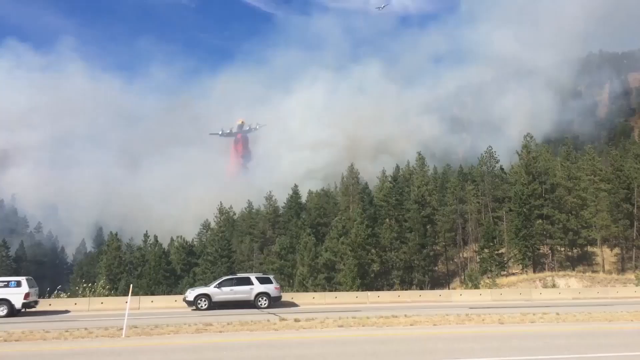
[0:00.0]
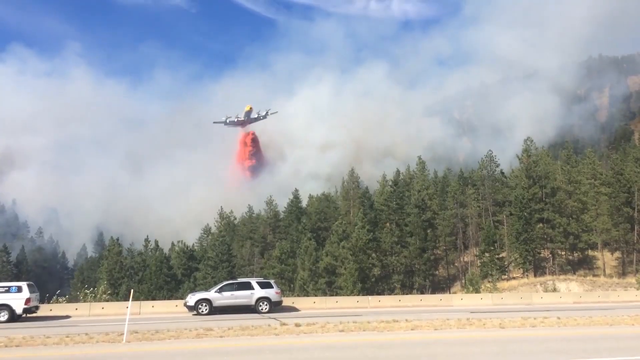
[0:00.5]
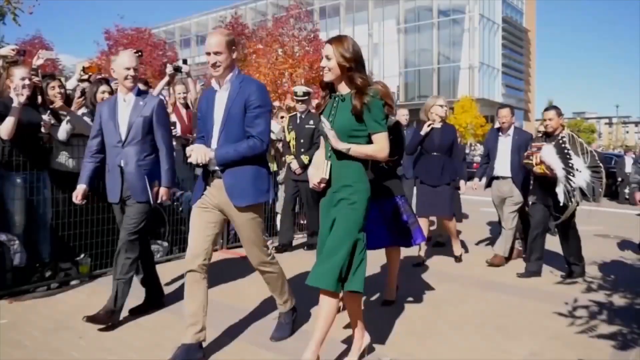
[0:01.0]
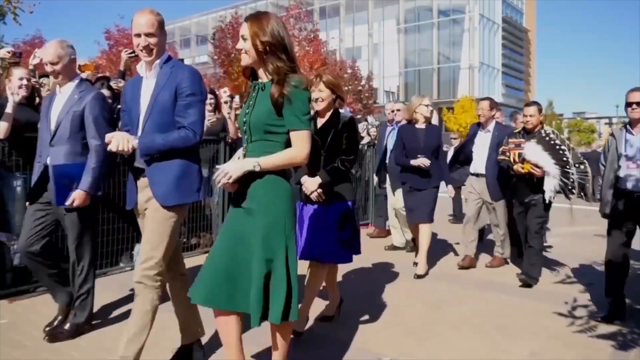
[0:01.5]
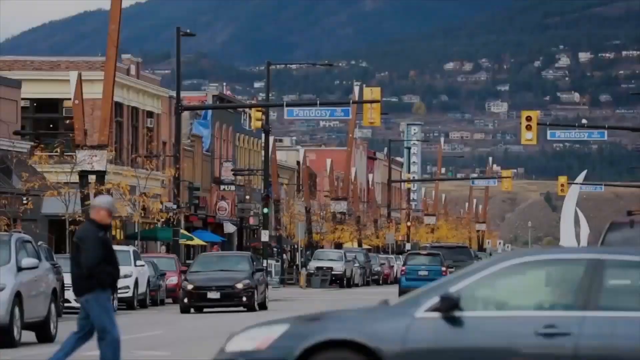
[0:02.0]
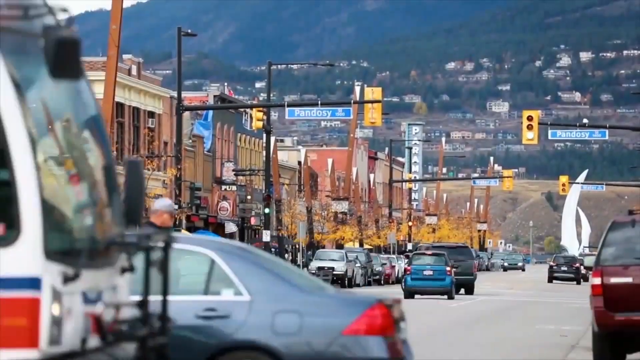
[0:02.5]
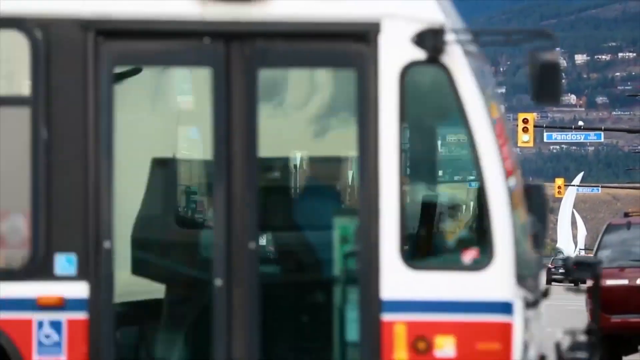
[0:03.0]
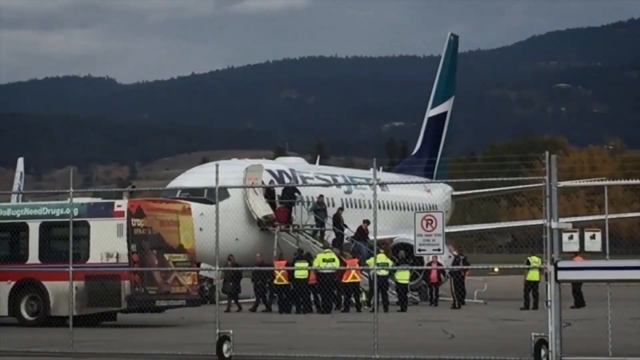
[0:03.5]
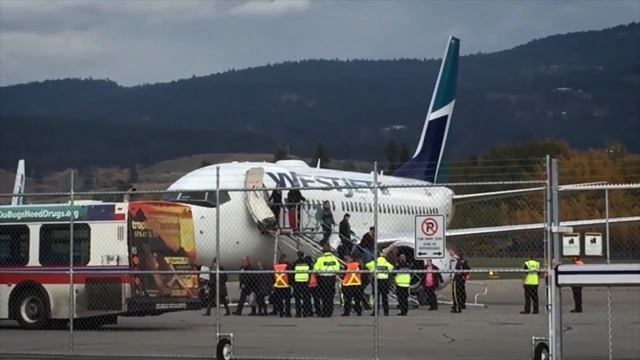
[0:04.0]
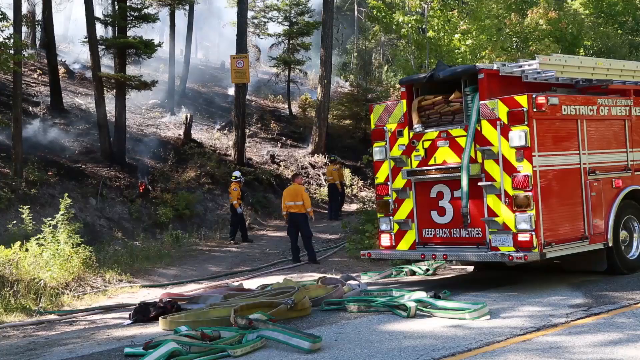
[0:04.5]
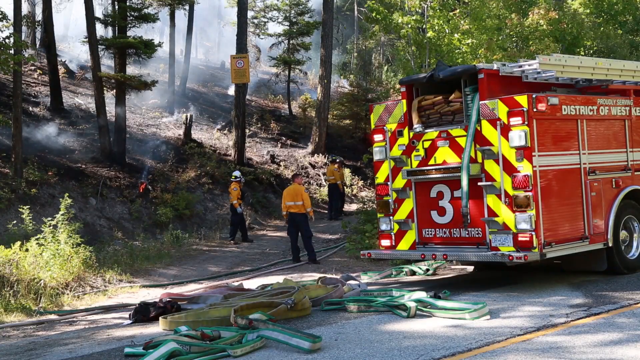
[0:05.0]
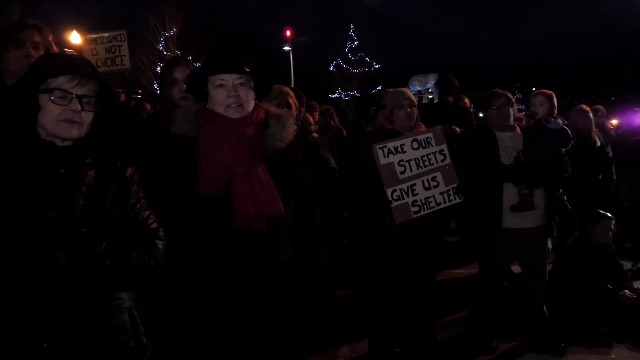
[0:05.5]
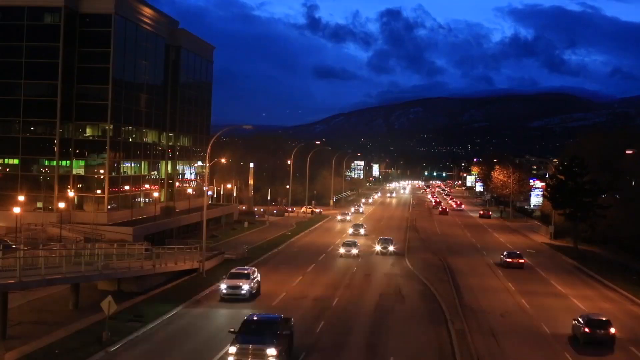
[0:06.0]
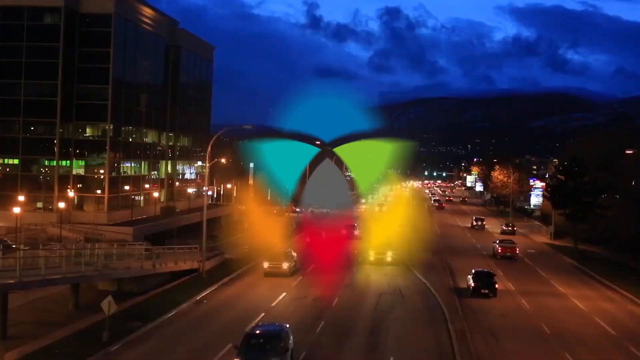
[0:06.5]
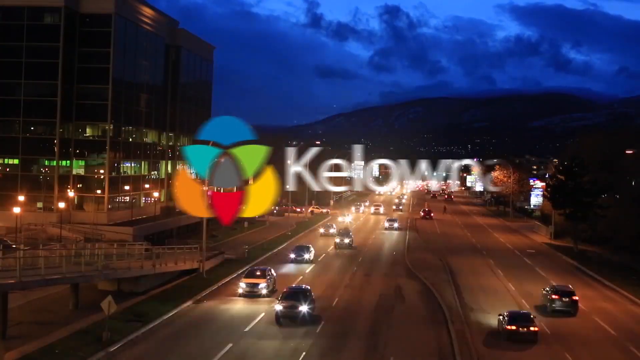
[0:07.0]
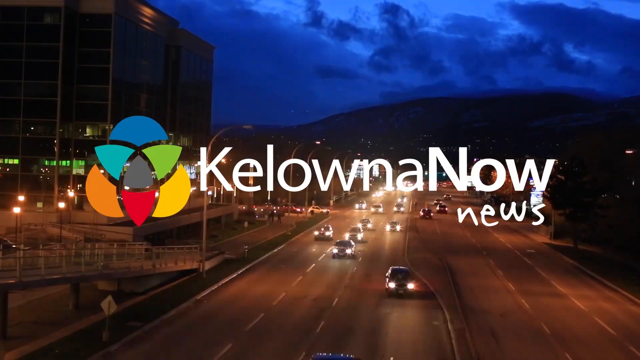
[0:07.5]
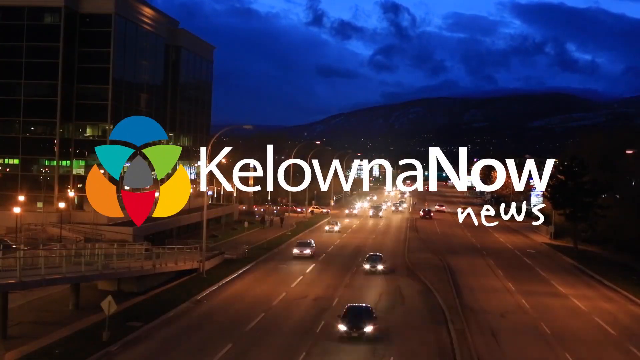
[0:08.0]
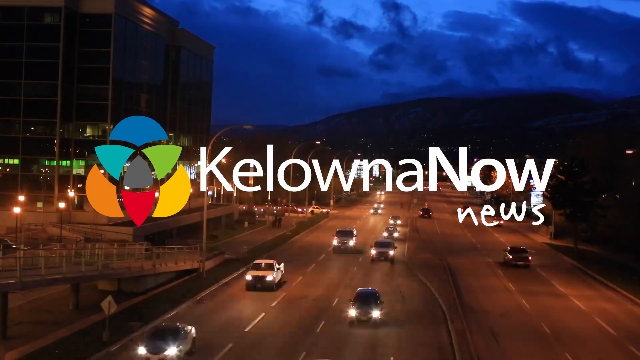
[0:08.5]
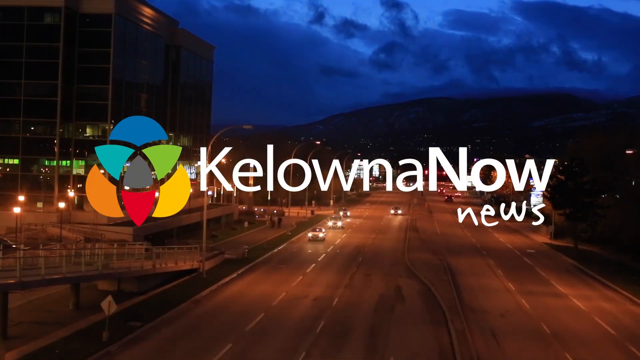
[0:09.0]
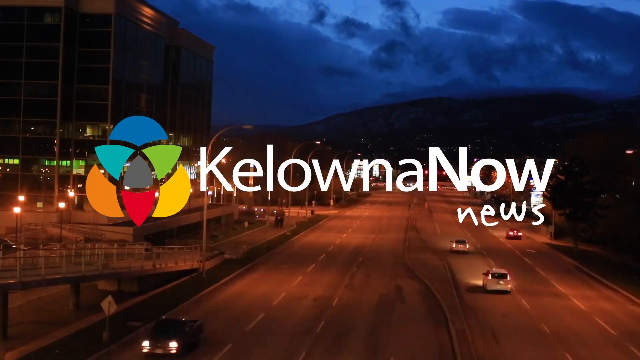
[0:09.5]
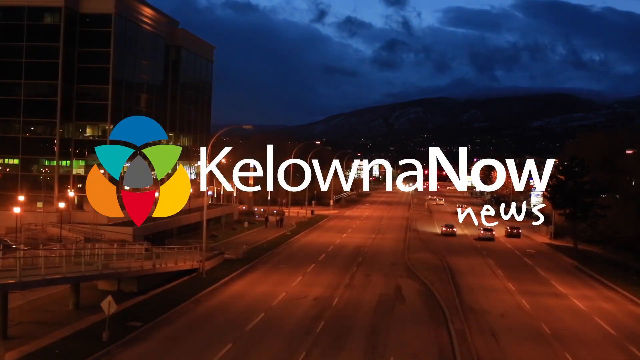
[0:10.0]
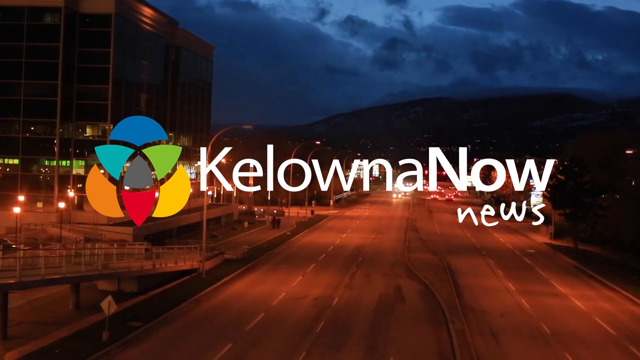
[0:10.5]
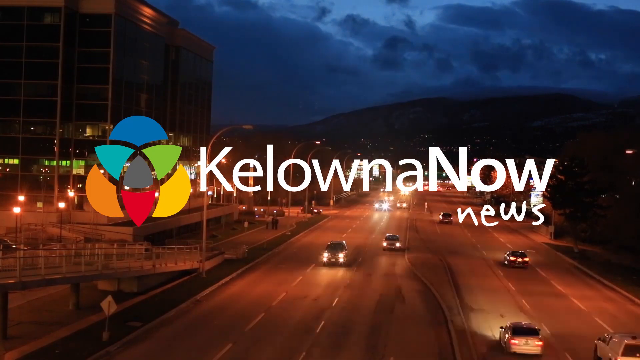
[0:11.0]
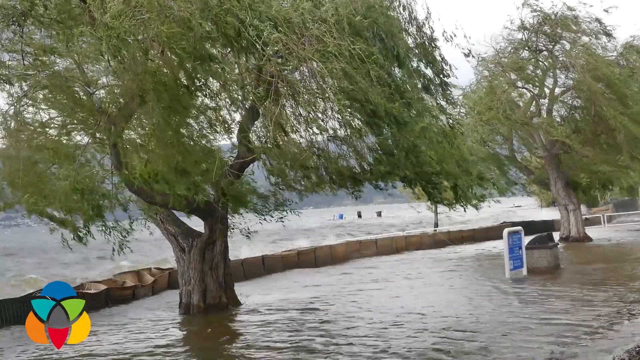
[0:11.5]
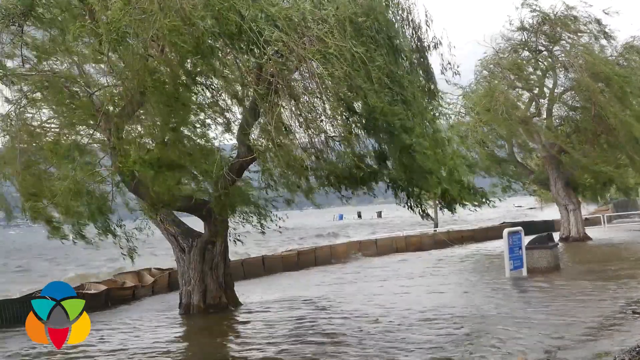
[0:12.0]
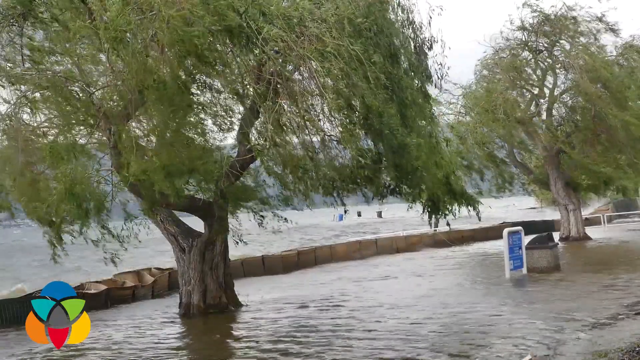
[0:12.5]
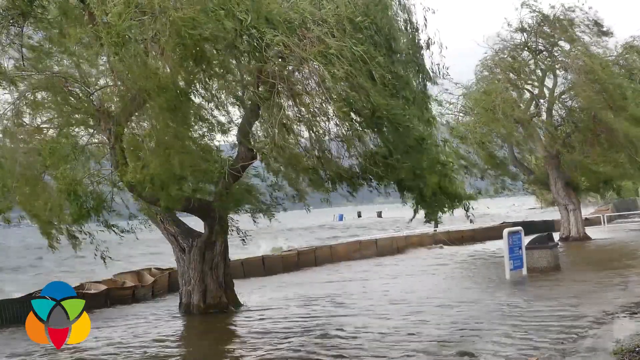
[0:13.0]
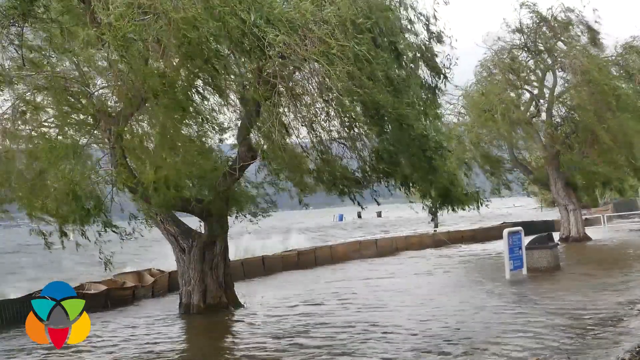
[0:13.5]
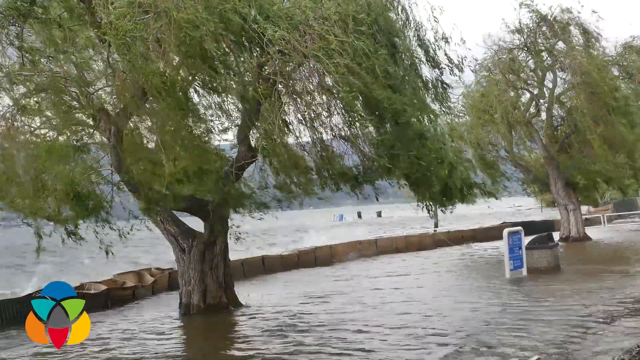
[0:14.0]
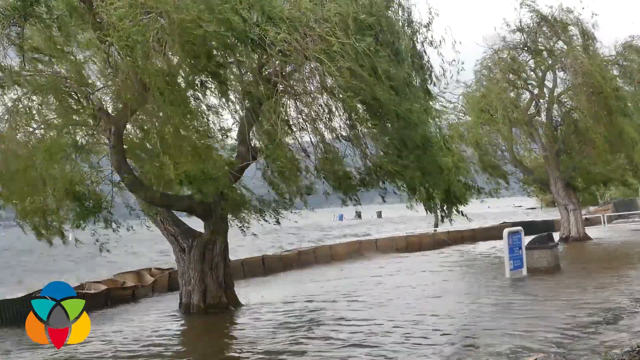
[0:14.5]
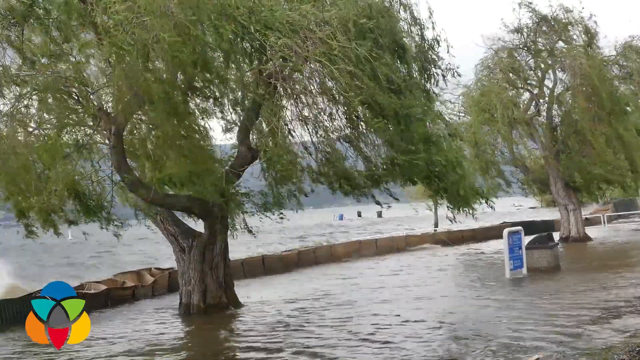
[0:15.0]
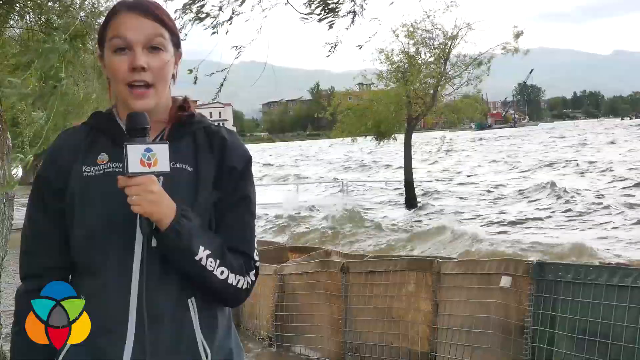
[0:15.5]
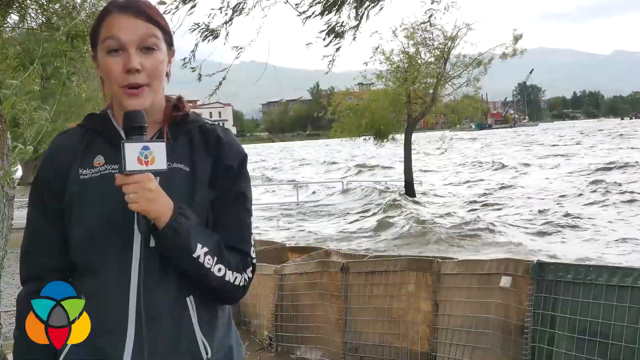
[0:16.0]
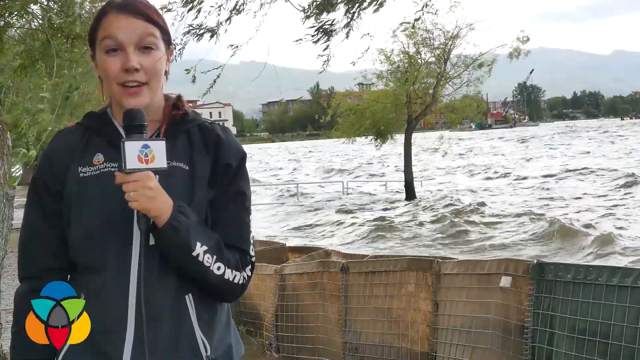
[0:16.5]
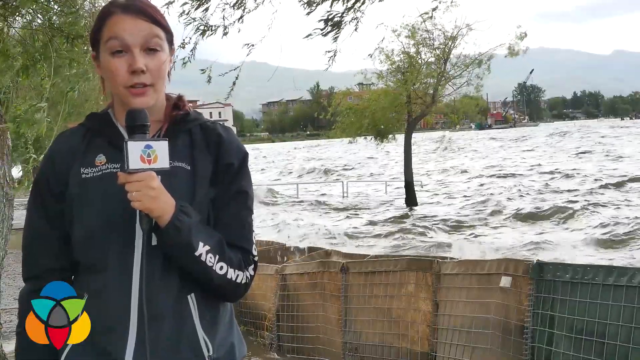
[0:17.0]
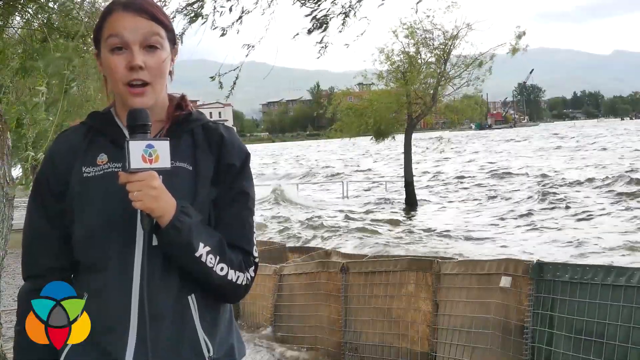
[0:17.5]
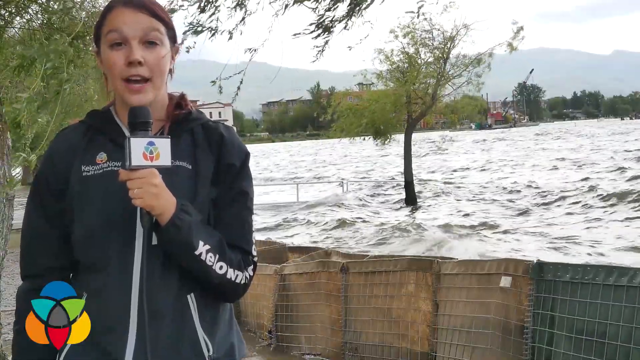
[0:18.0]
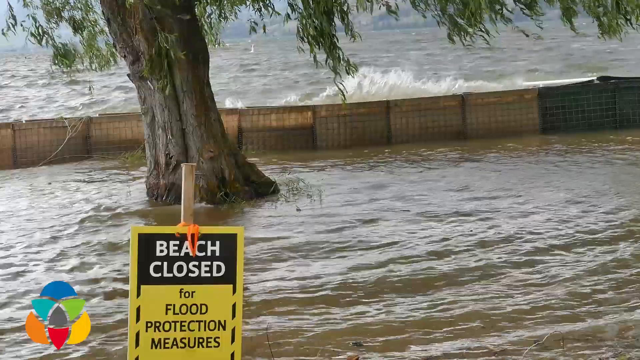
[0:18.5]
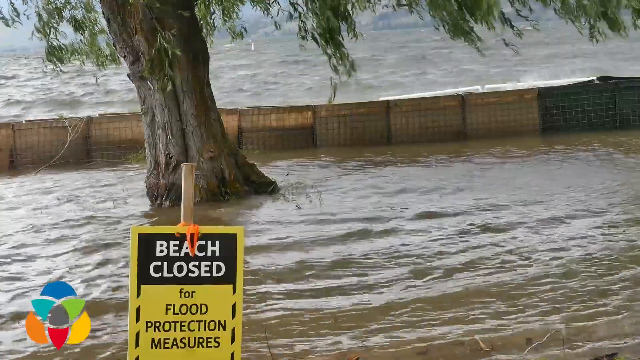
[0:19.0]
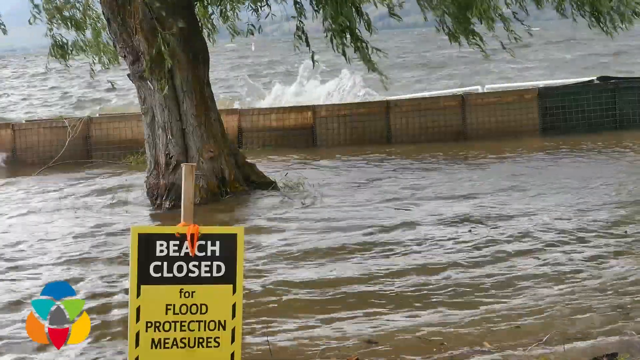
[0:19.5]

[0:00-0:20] The scene opens on two vehicles and a forest under a cloudy sky, with the weather somewhat sunny. The next scene shows a lot of people: a man wears a black jacket, a shirt and trousers, and beside him is a woman in a green dress. Another woman wears a black jacket. Some vehicles pass by, and there is a plane at the airport. Then a fire has broken out, and it is extinguished with a fire extinguisher. Another picture shows people at night, with someone holding a board with "TEK" written on it, though it is not clear. Another picture follows, also at night. Then the text "KELOLAND NOW NEWS" appears. A scene follows with floods and trees being waved by the wind. Next, a woman appears with trees and floods in the background.